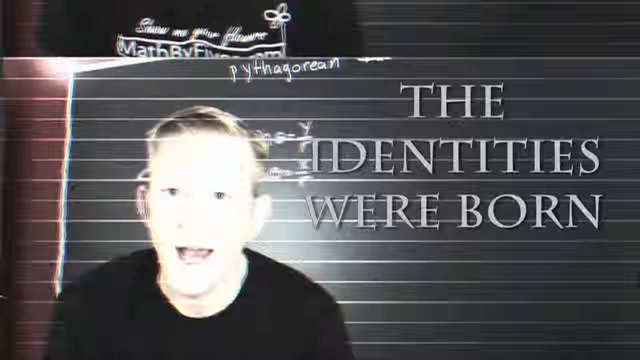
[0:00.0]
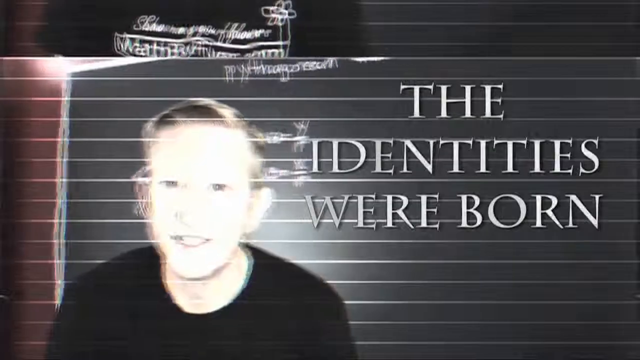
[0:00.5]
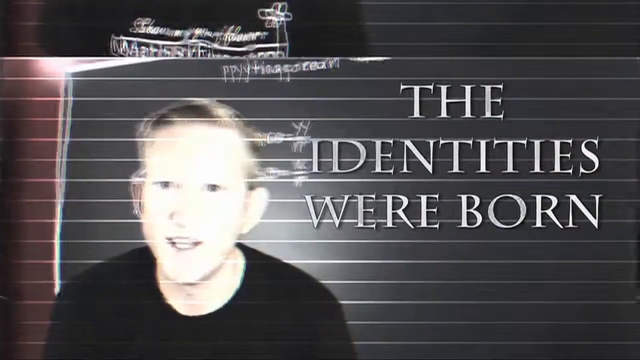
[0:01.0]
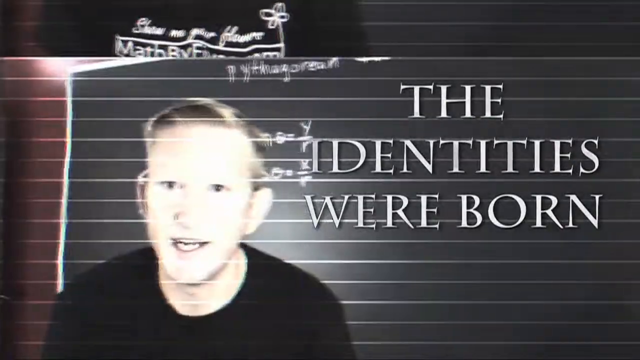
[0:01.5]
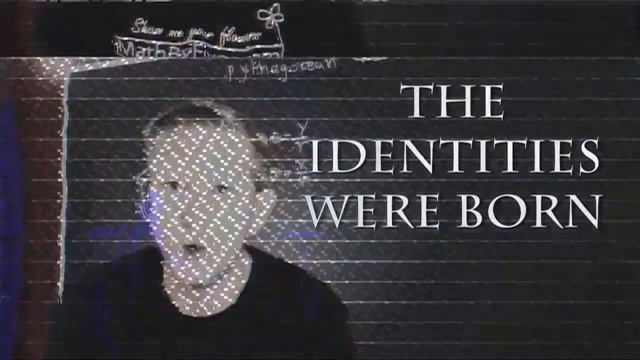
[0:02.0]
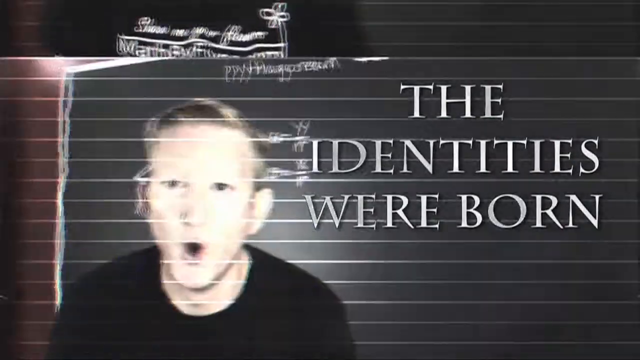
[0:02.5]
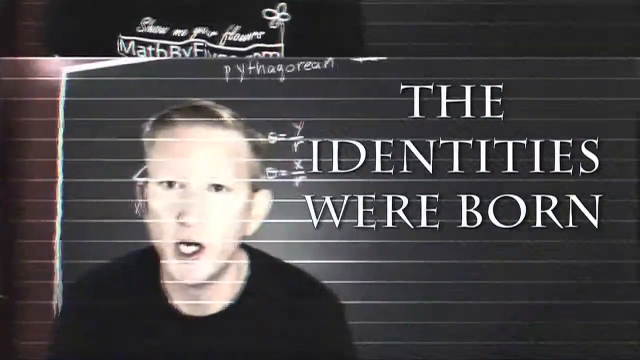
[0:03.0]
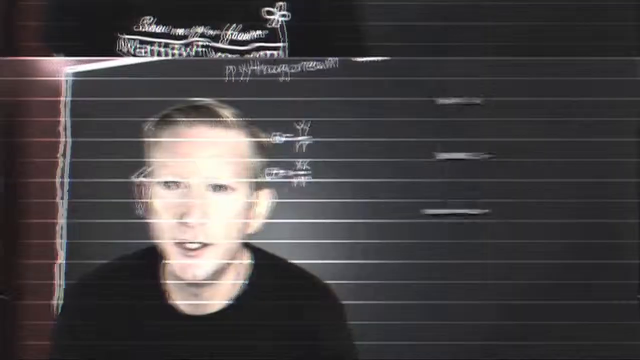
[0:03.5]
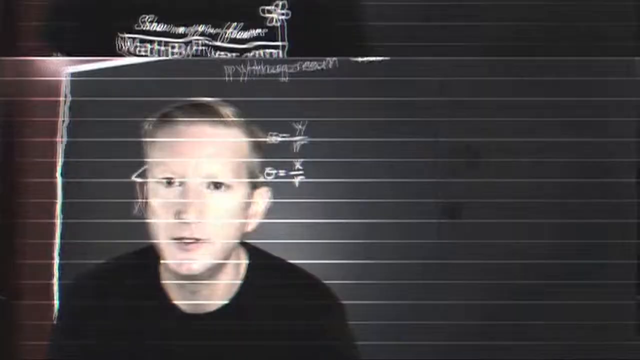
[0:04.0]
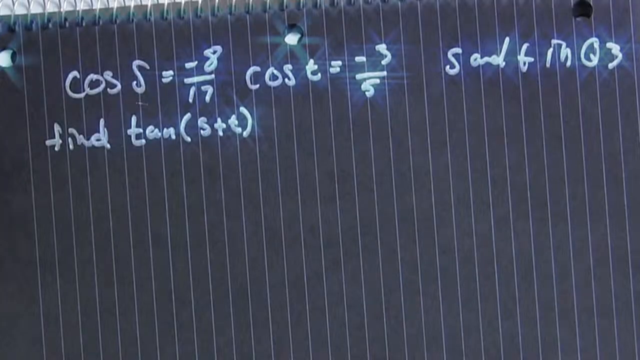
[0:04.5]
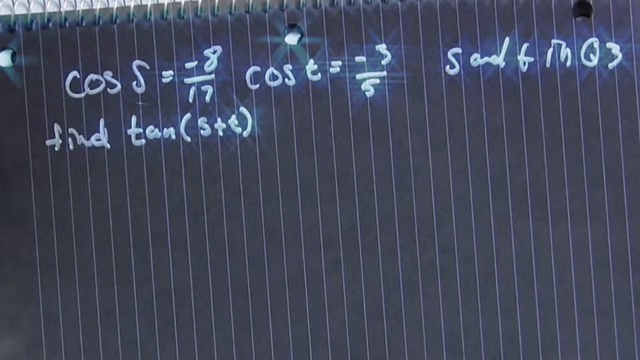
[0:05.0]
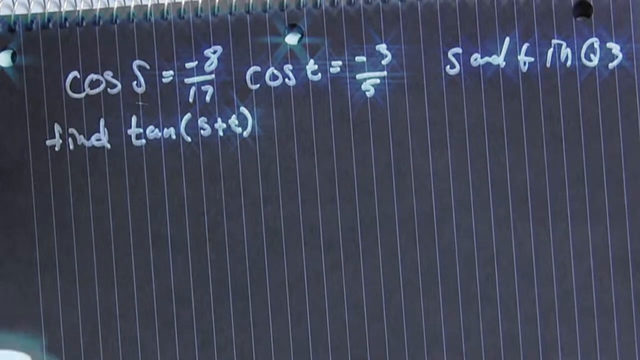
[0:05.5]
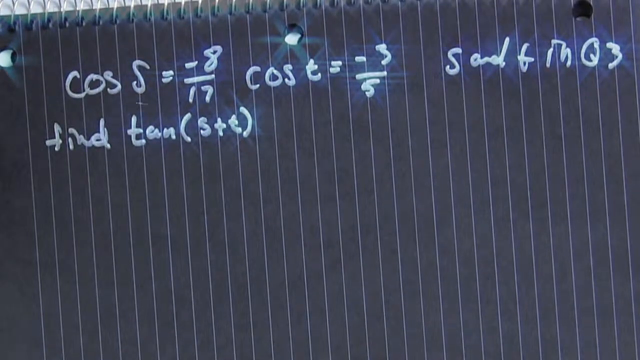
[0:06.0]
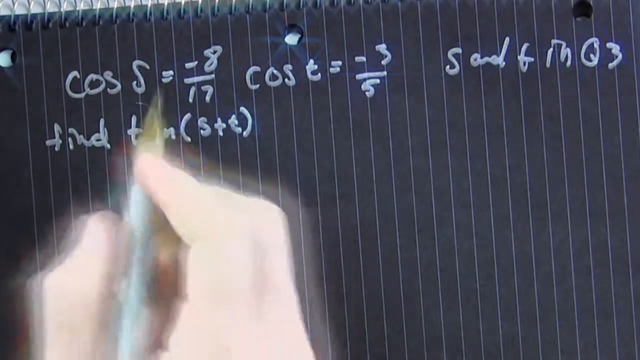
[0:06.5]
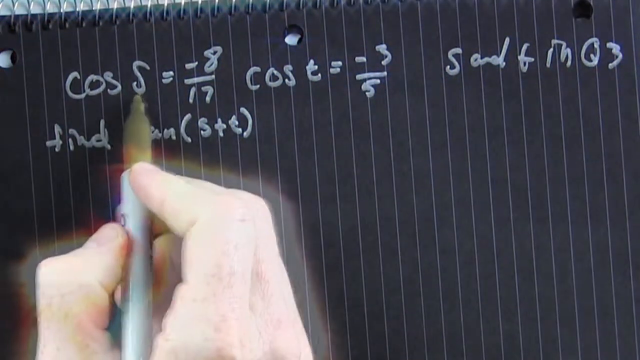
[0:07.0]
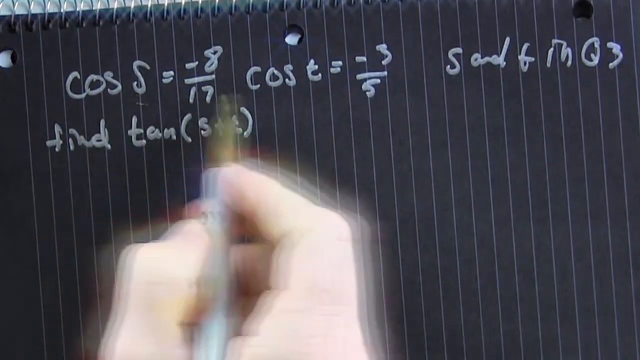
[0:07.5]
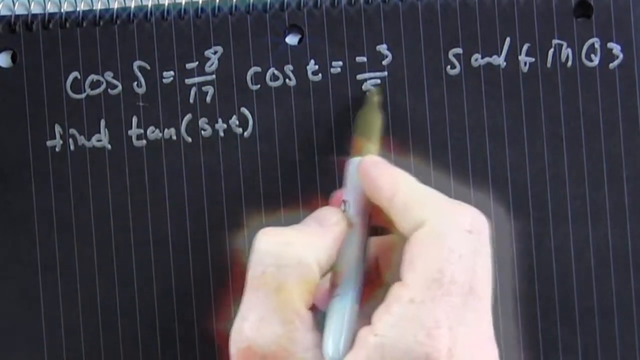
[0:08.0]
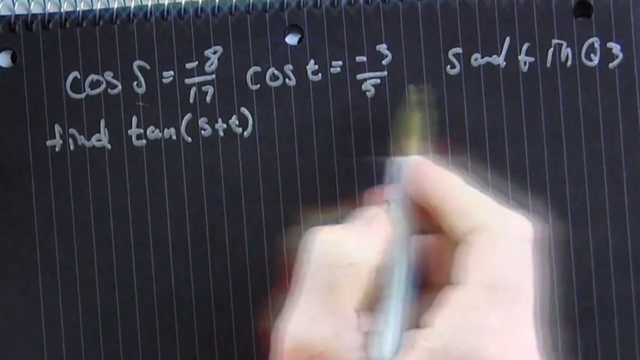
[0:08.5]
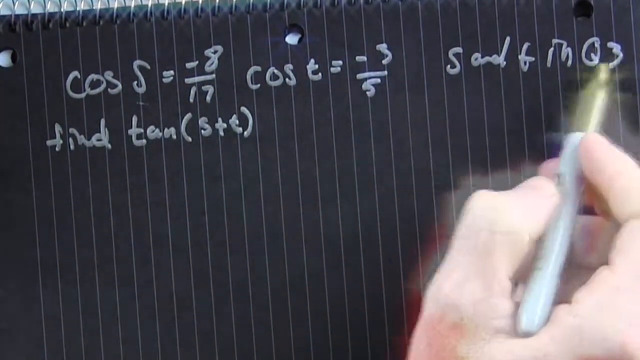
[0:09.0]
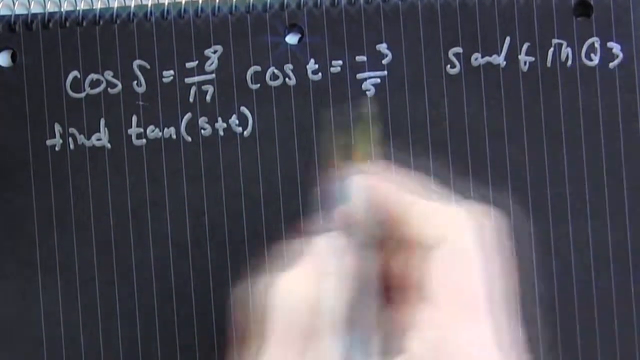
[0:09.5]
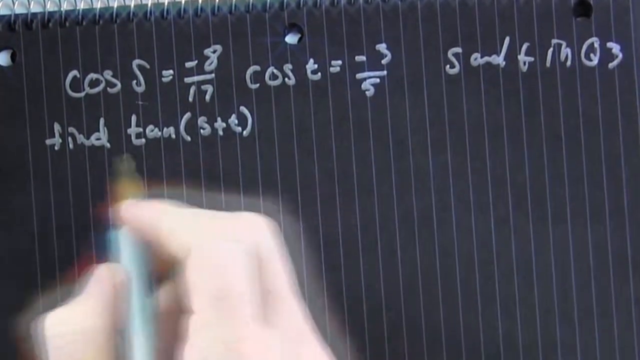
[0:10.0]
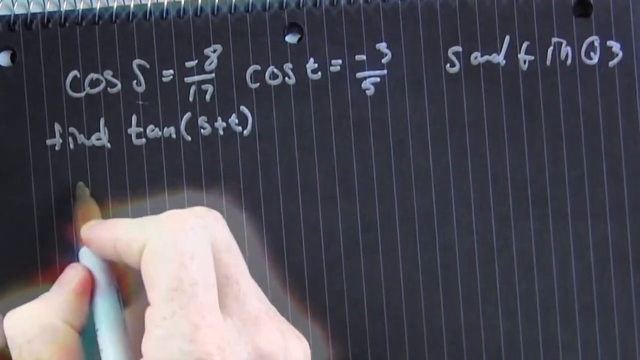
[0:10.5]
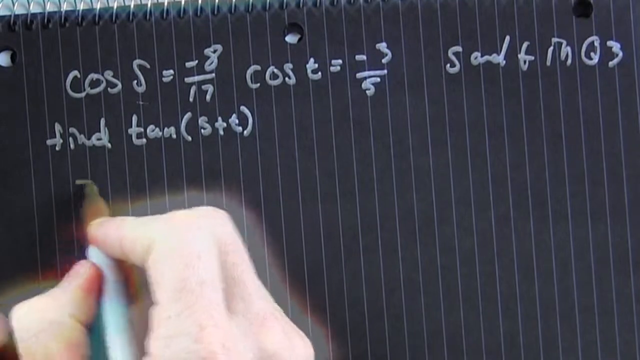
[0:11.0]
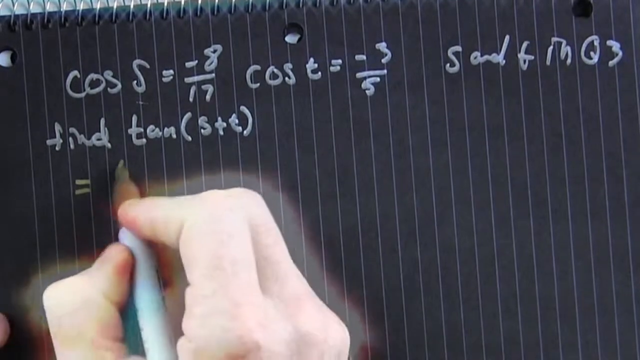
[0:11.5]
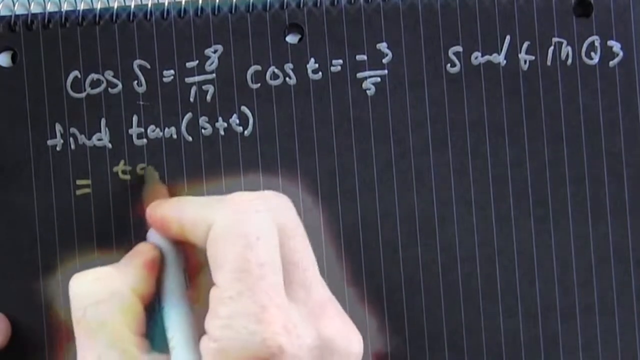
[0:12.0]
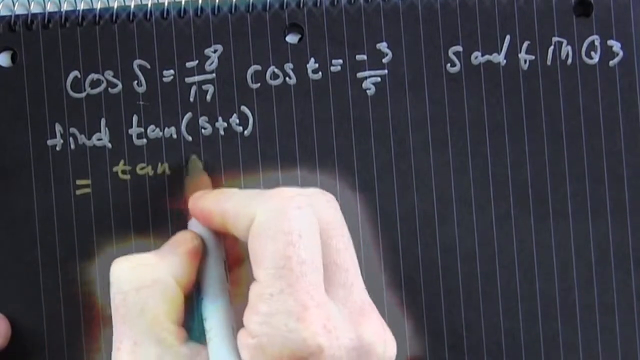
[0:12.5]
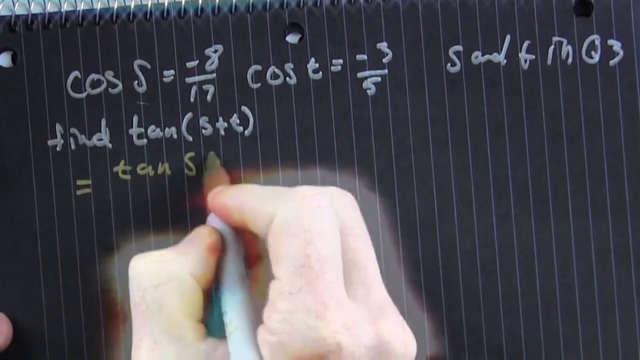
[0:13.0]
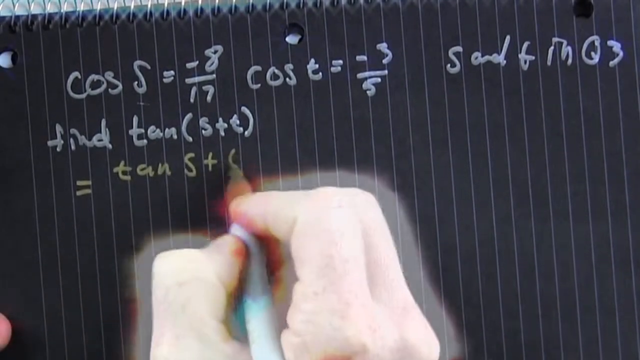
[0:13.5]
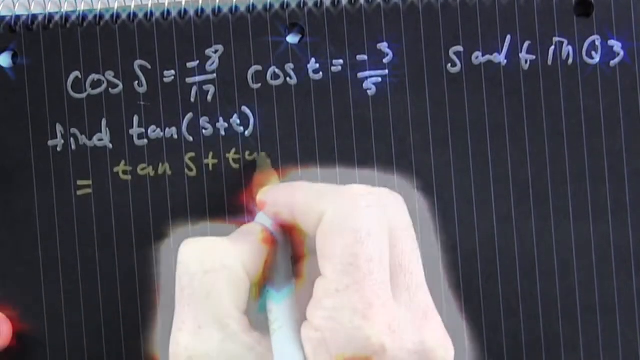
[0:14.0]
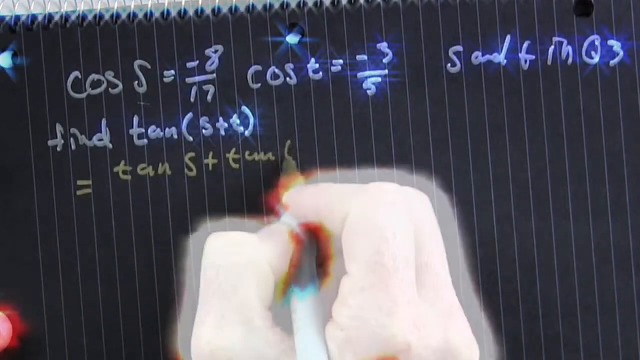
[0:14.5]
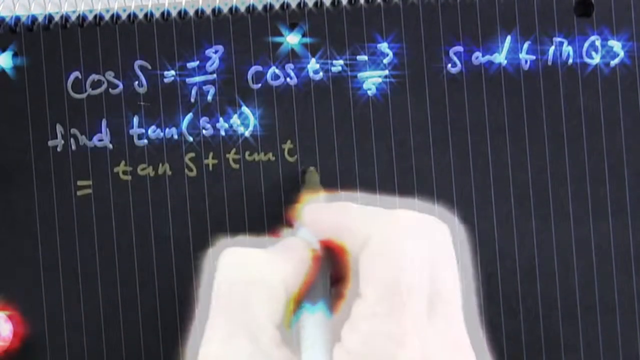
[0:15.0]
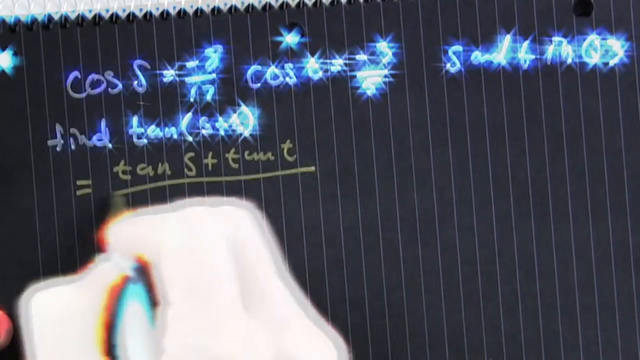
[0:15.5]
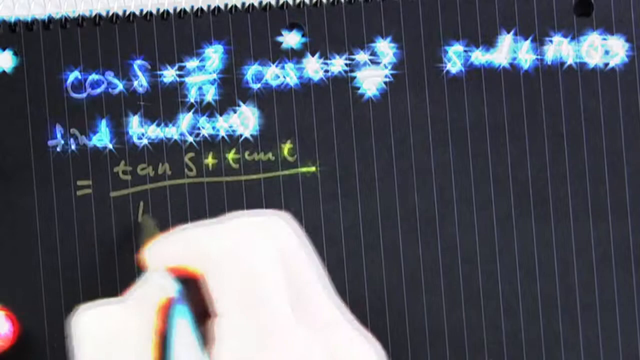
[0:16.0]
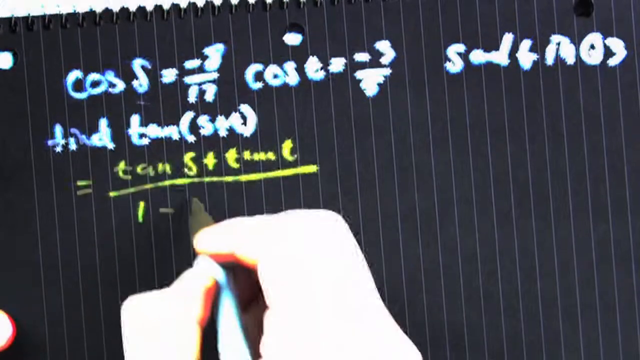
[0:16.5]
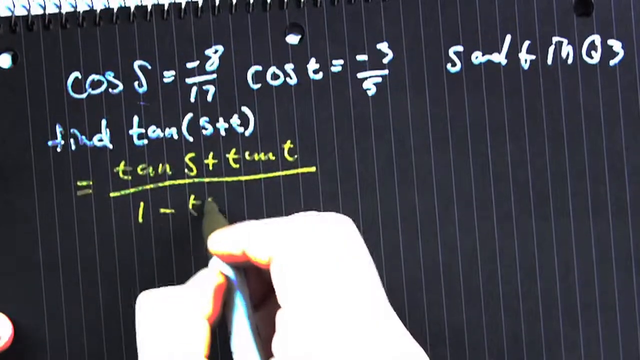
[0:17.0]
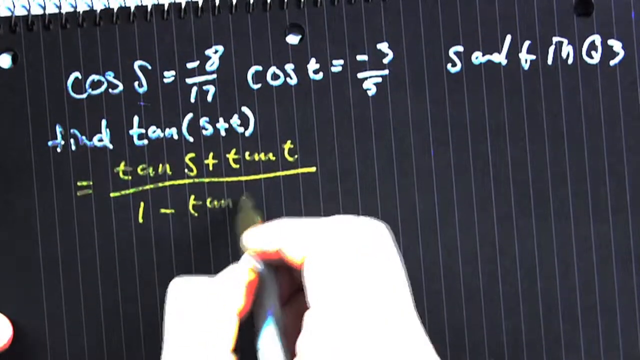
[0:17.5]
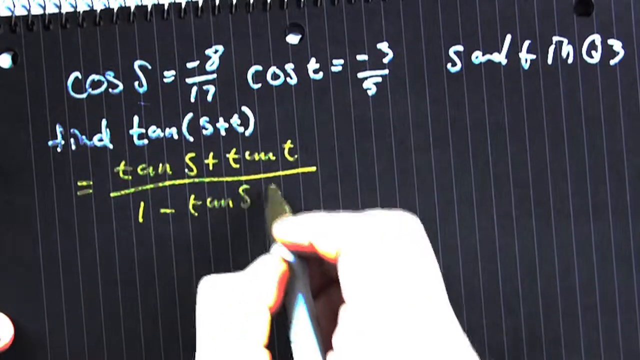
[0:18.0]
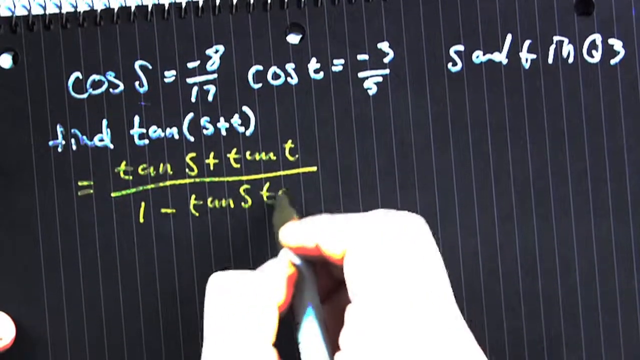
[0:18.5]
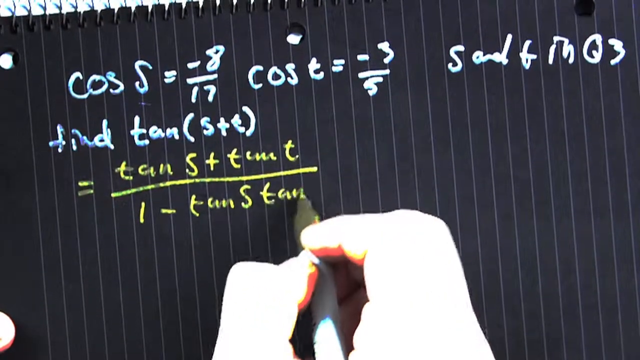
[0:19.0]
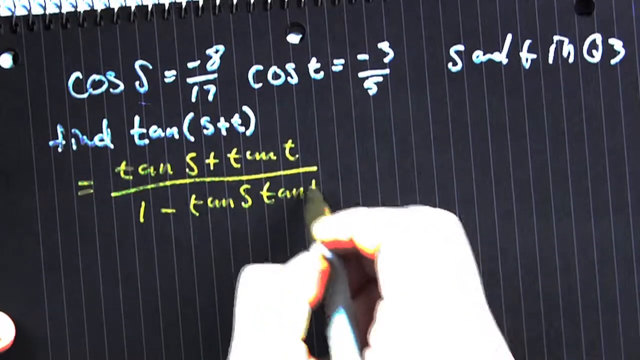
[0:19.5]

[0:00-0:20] Against a strange, dynamic background in dark colours, a topic titled "the identity were born" appears. On the left side of the screen is a white man with light hair and blue eyes who talks and shouts toward the viewer. Text that possibly reads "show us your flowers by Pythagorean" is also visible. Next, the details of a task appear: cosine S, cosine T and some details about the cosine and sine, with the goal of finding the tangent of S plus T. The man begins writing a formula to answer the task on a black paper, and this part ends with one formula he has written on the paper.